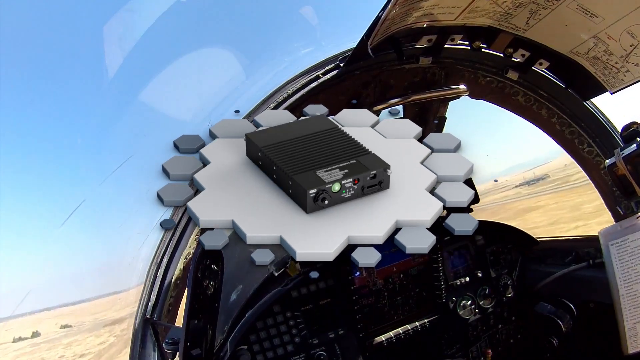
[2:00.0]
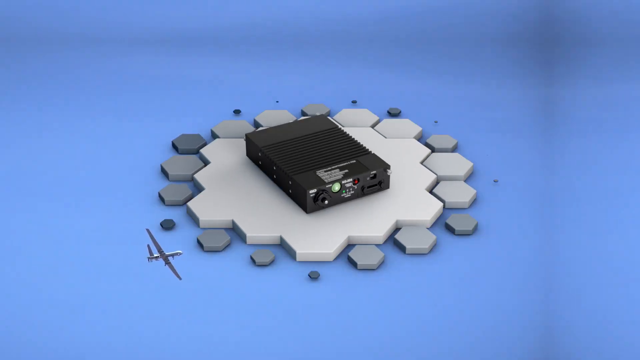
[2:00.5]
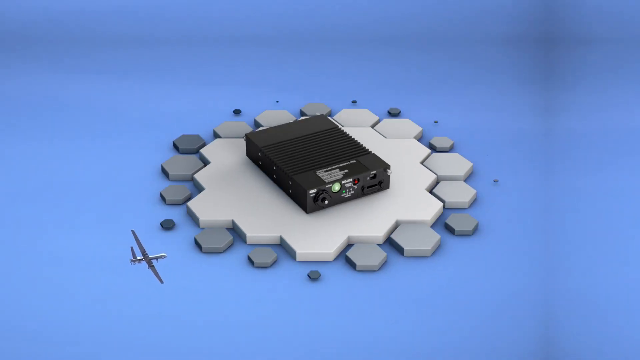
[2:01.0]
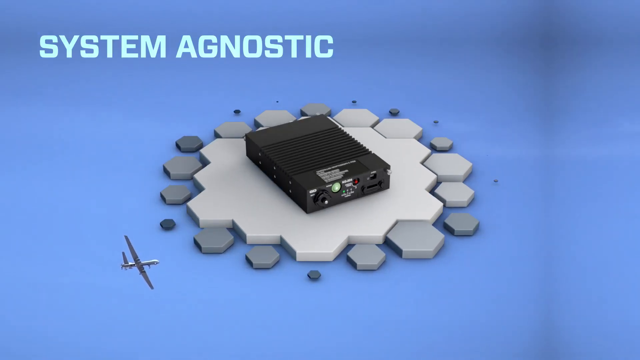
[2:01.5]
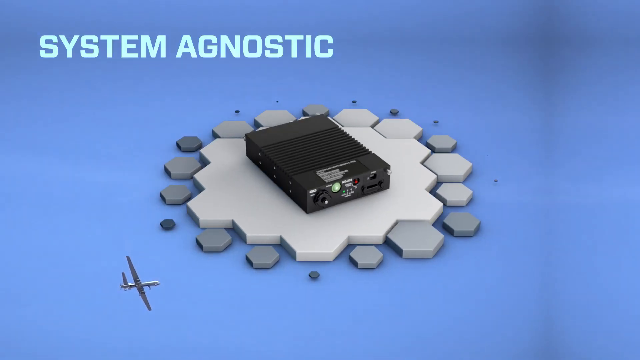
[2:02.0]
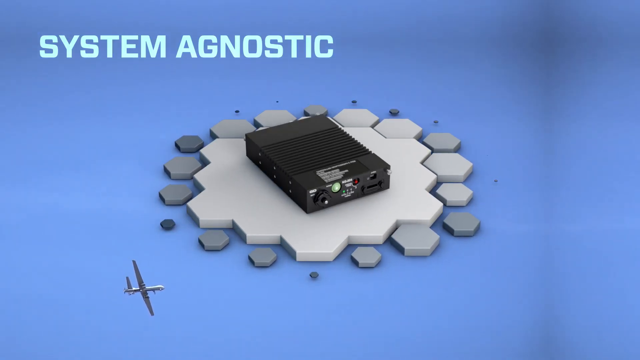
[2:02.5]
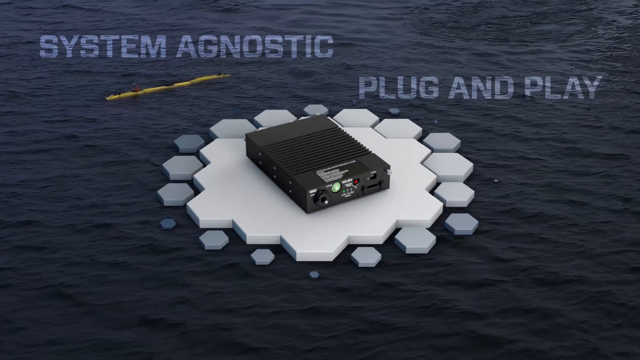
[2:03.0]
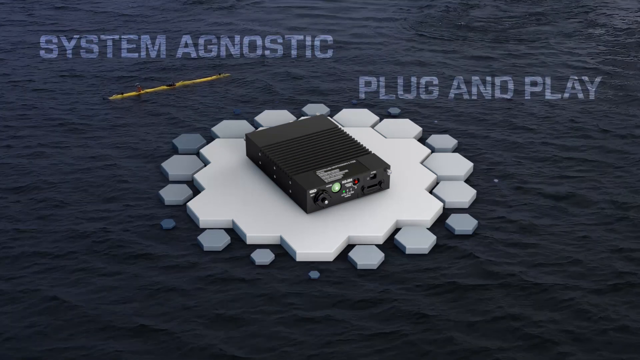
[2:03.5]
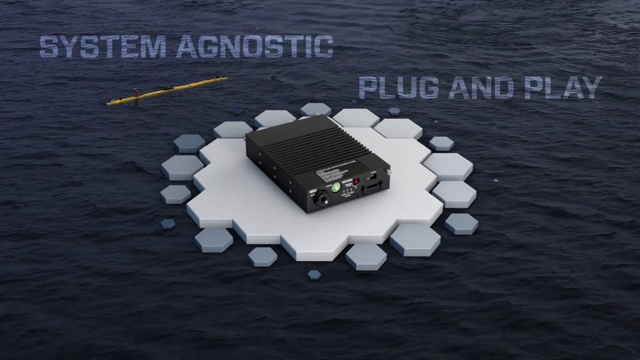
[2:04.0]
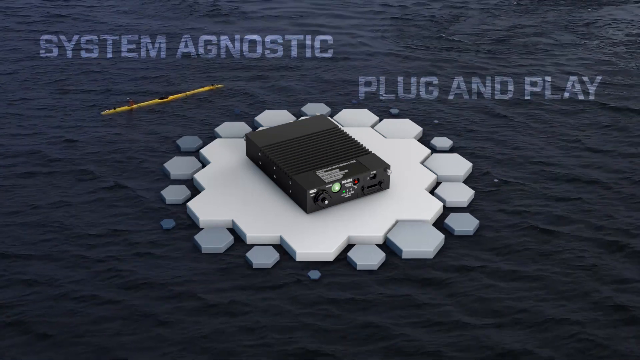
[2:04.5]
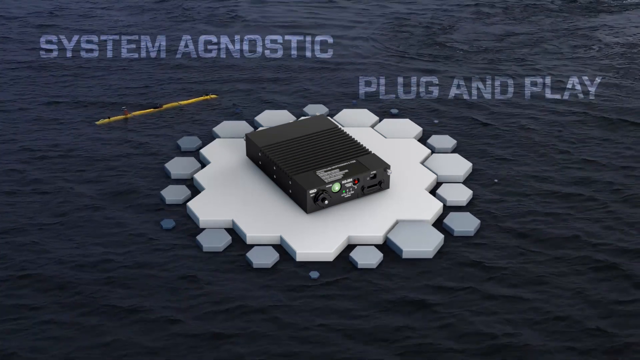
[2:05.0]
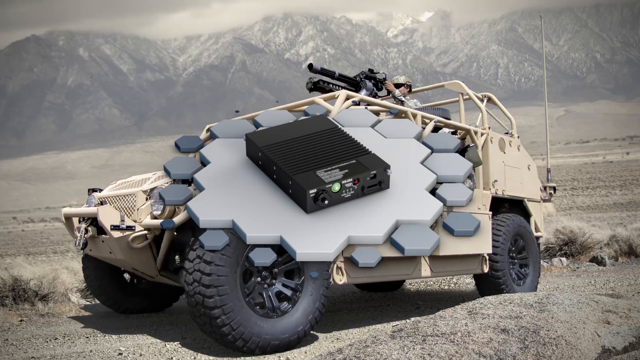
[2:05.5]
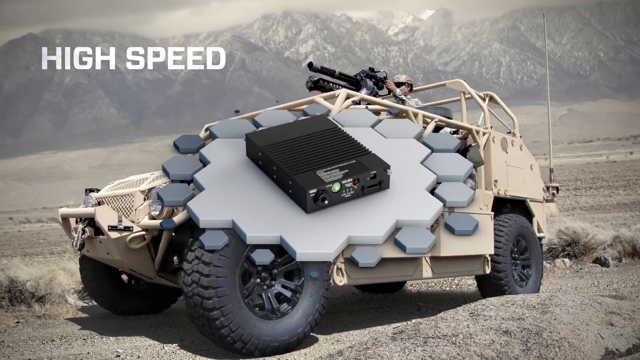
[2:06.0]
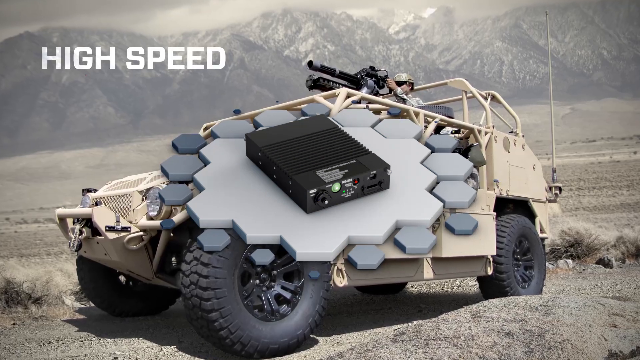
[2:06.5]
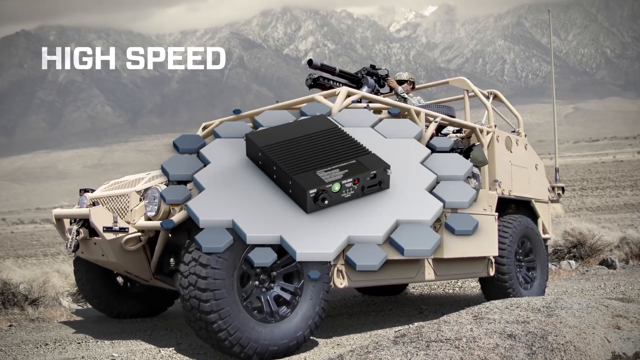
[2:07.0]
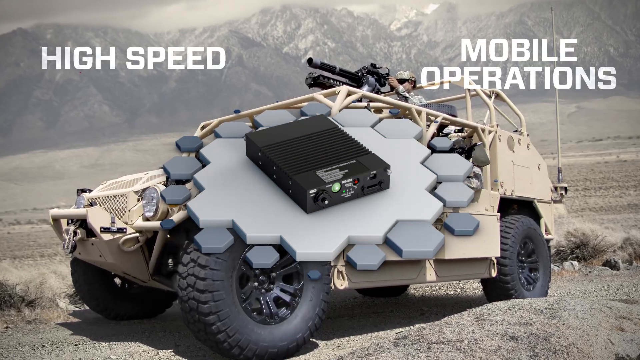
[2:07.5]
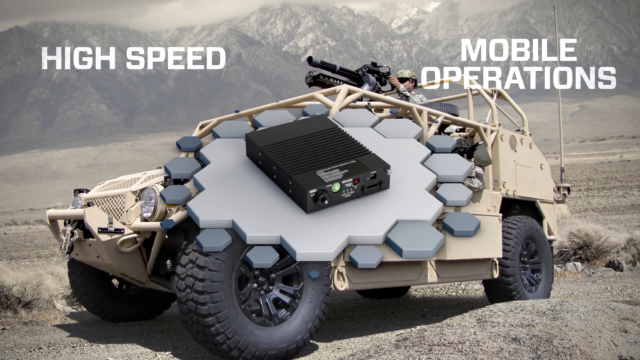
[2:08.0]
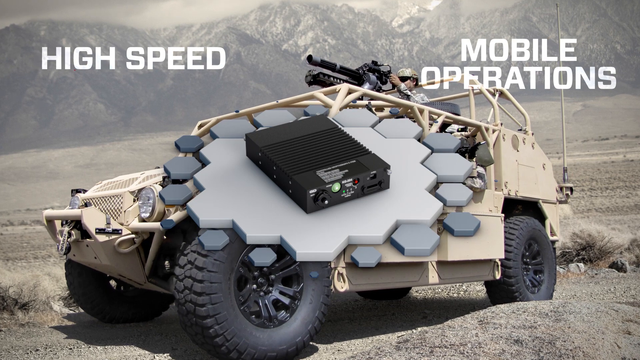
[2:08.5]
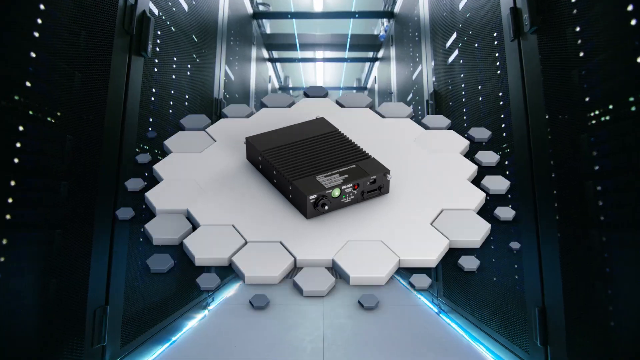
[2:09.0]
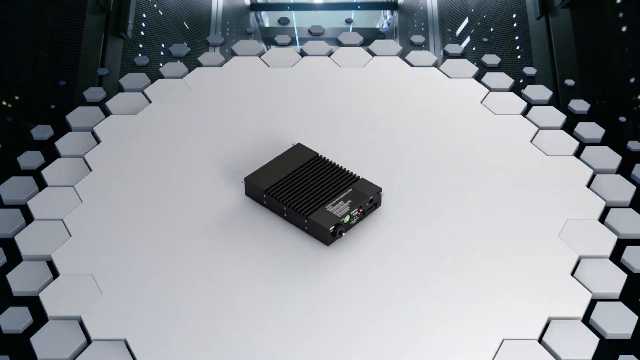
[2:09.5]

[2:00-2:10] One of the black boxes appears, with giant light blue text at the top left reading "System Agnostic." The black box has green and red buttons on its front and a kind of wavy middle section that is still black but stands out with many edges. It is sitting on top of a white hexagonal surface that kind of breaks off around the edges into full hexagons. Next, a body of water appears with the yellow stick floating in it, possibly some sort of submarine. Then the brown truck is shown, and it kind of spins around a bit.